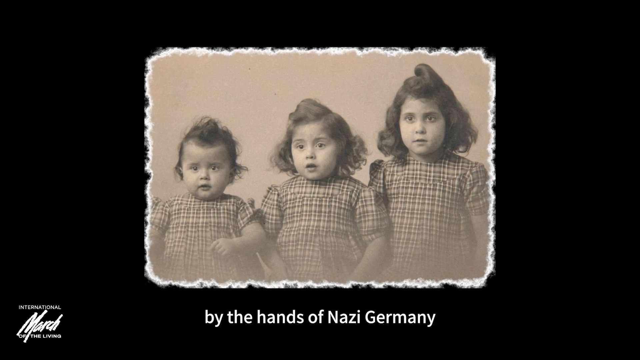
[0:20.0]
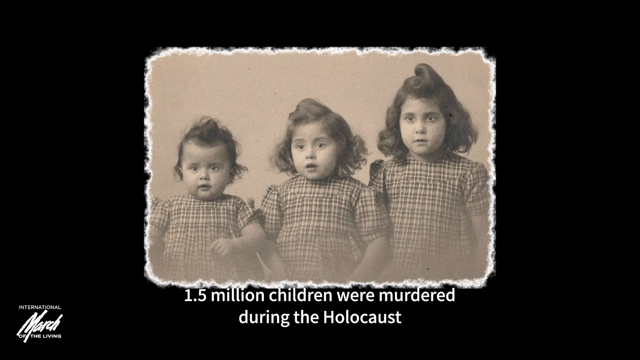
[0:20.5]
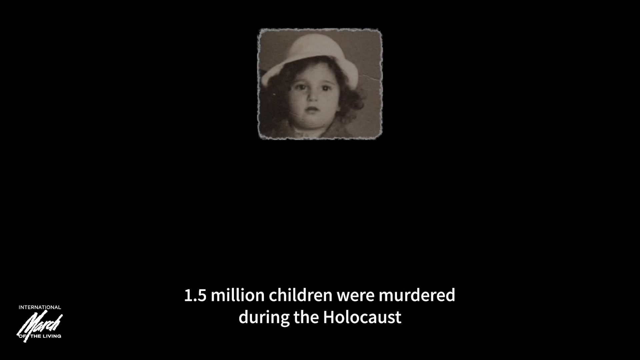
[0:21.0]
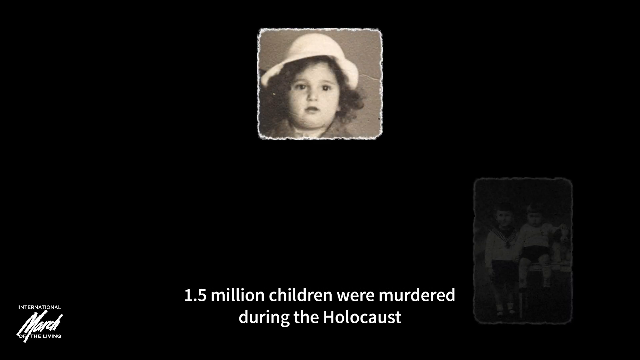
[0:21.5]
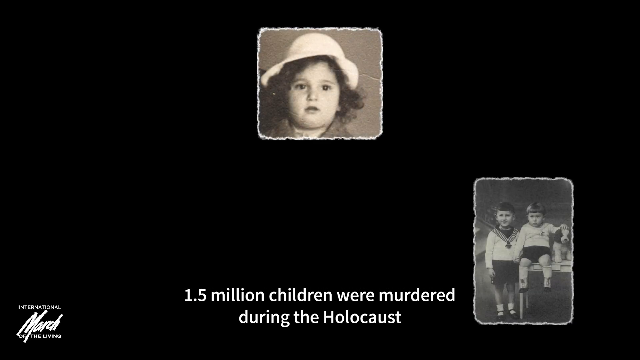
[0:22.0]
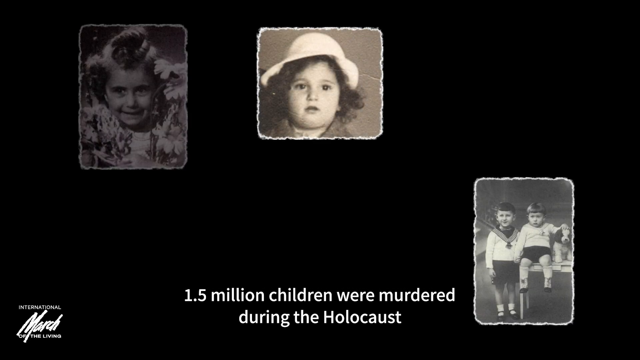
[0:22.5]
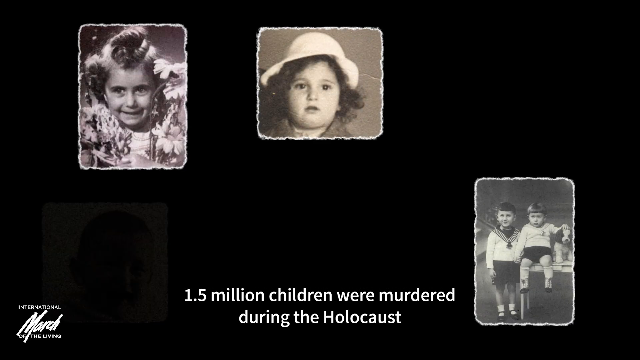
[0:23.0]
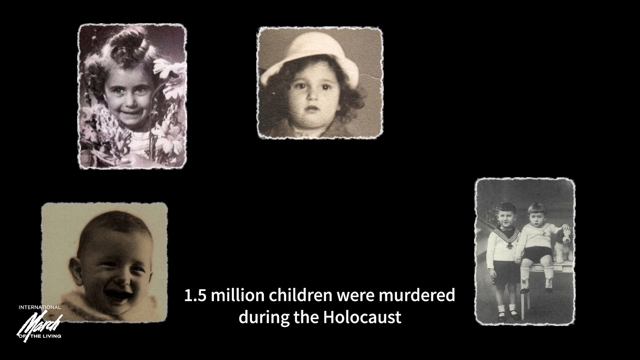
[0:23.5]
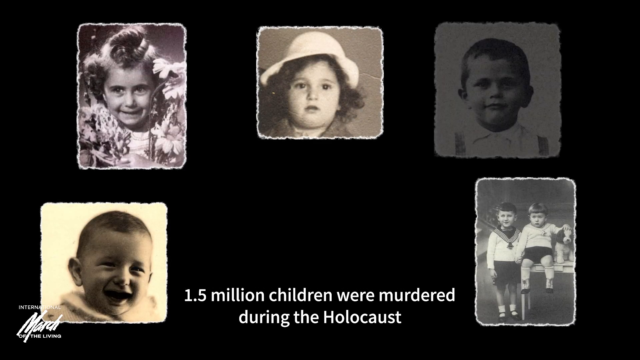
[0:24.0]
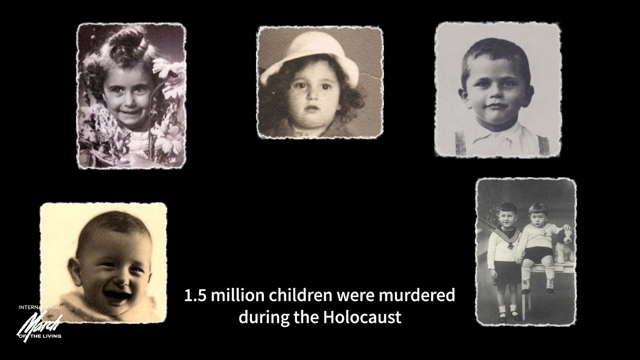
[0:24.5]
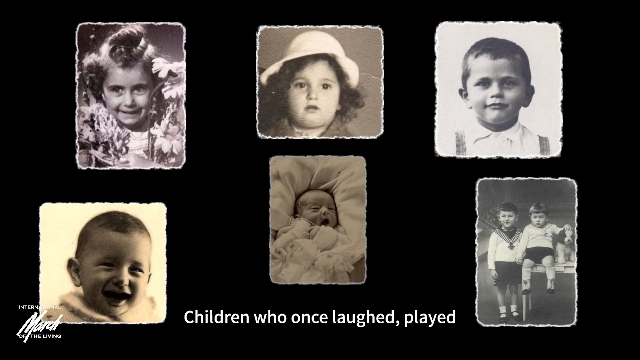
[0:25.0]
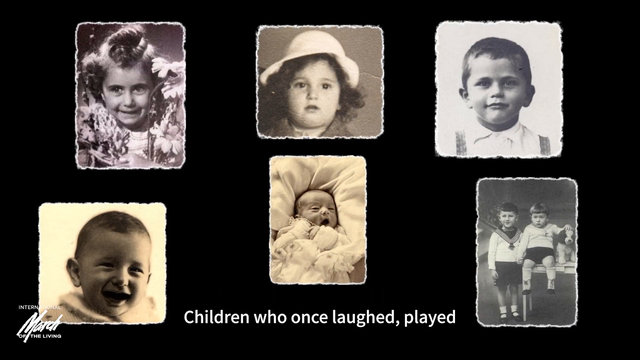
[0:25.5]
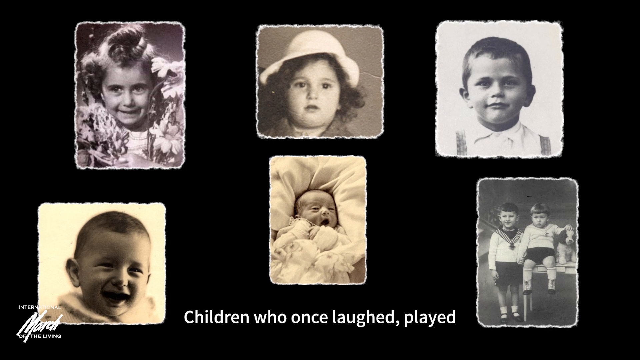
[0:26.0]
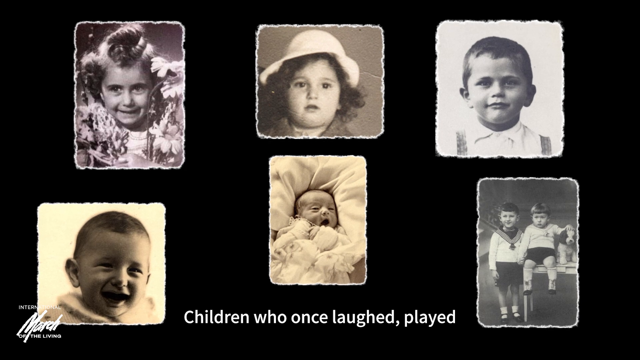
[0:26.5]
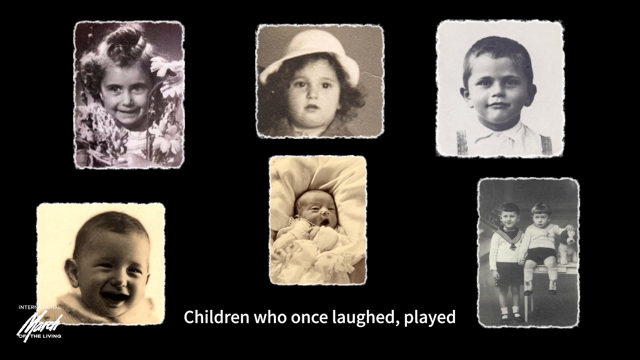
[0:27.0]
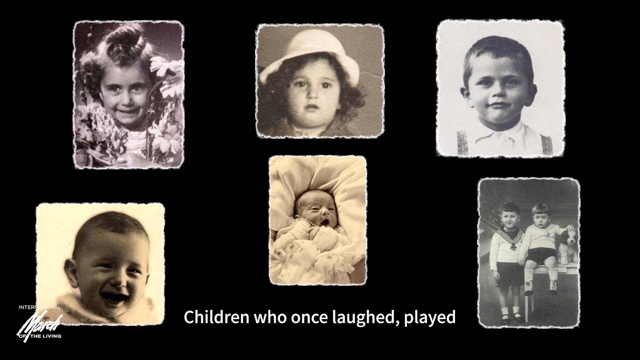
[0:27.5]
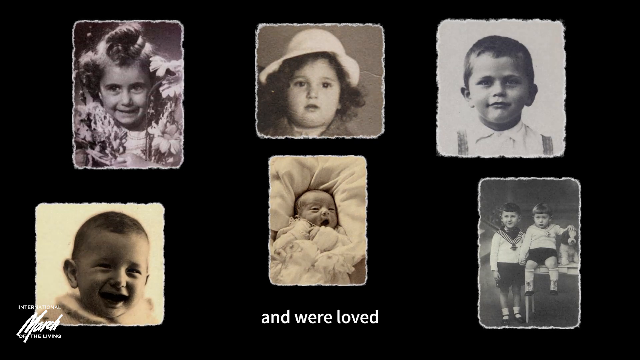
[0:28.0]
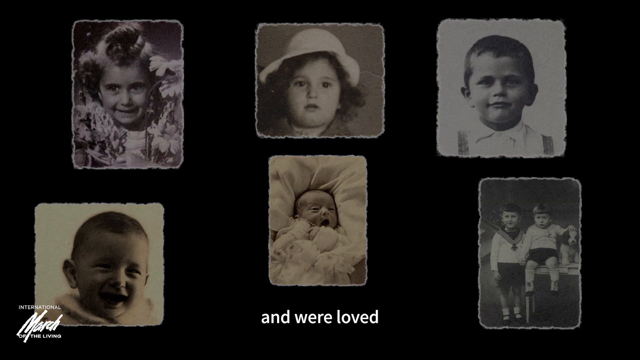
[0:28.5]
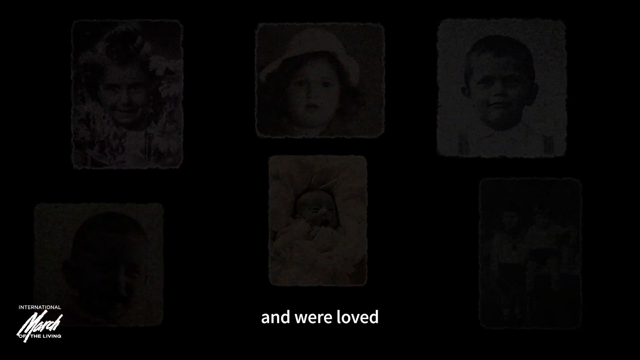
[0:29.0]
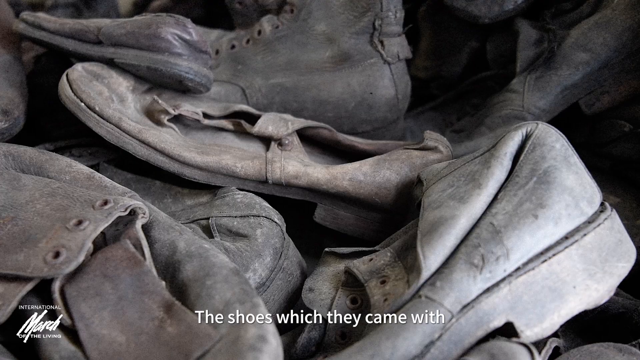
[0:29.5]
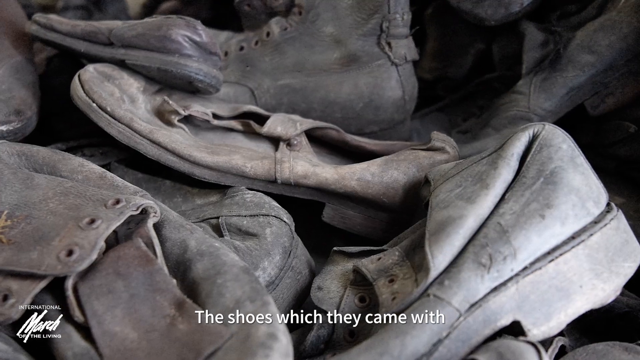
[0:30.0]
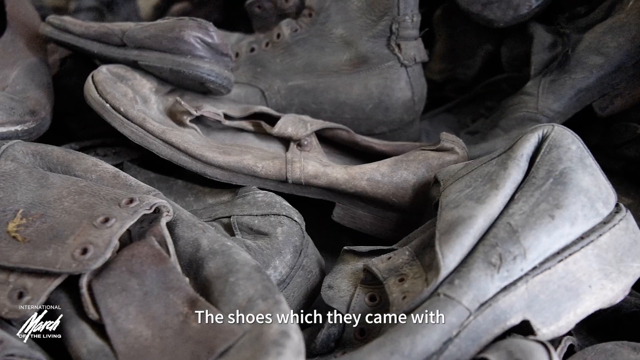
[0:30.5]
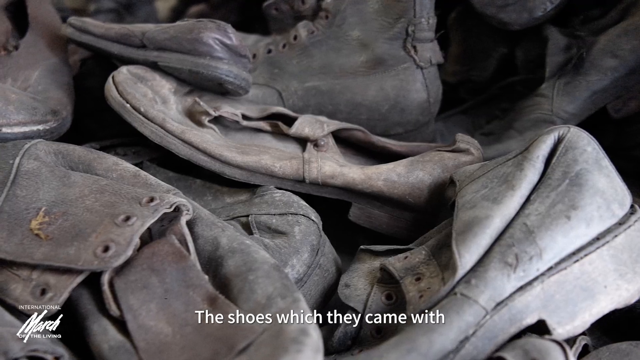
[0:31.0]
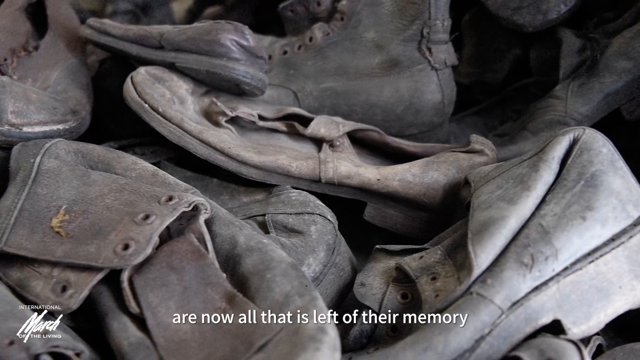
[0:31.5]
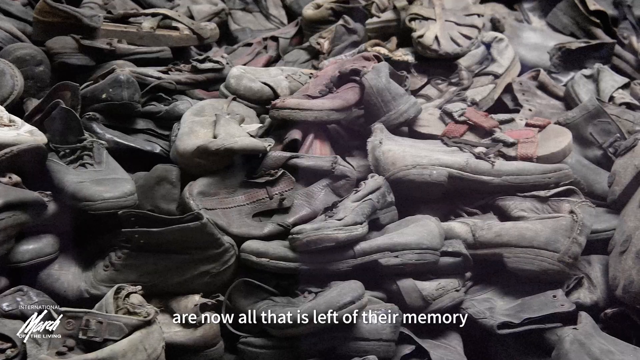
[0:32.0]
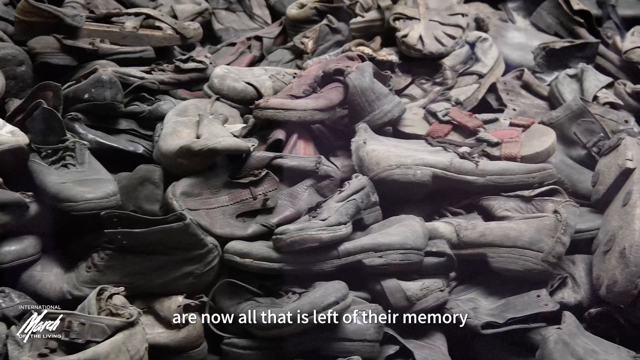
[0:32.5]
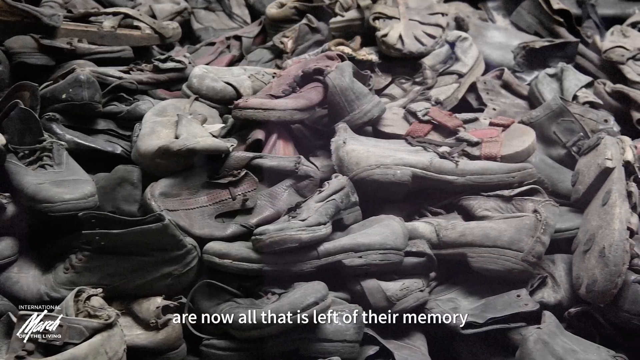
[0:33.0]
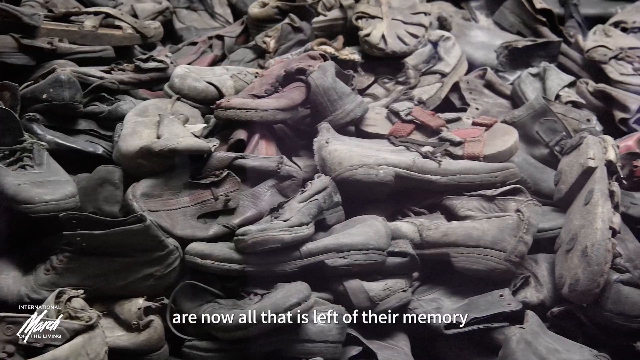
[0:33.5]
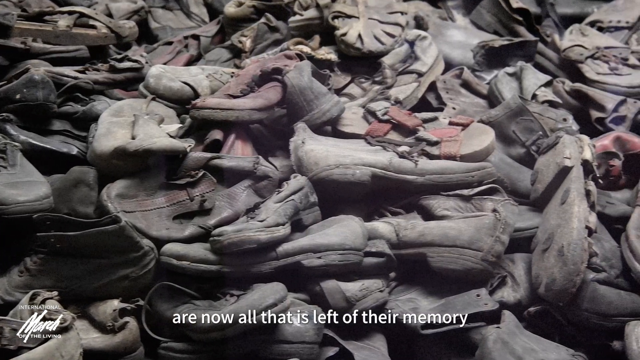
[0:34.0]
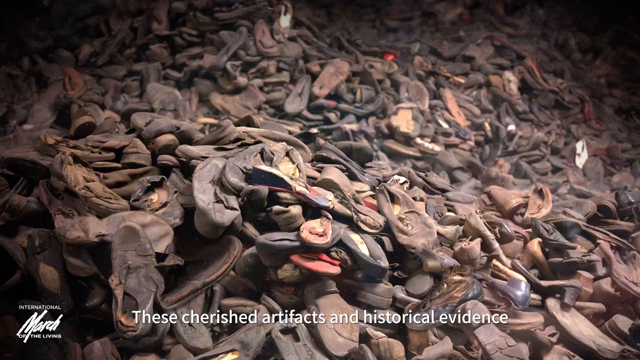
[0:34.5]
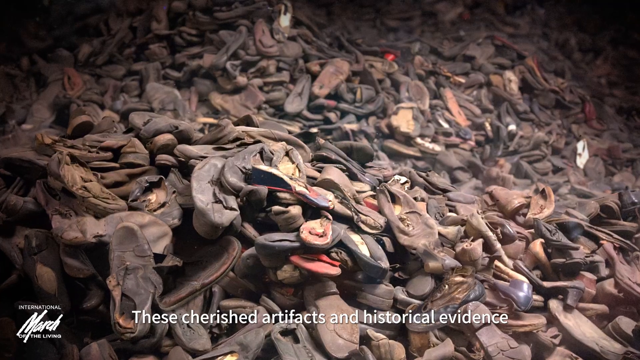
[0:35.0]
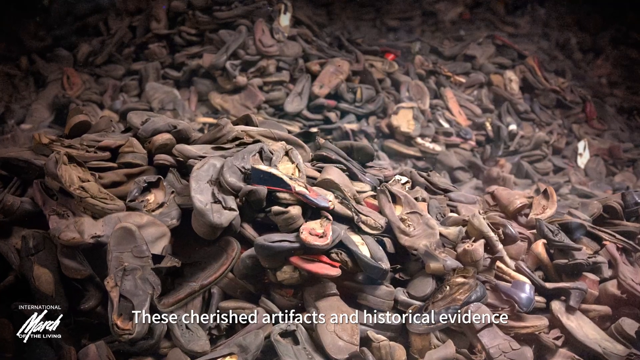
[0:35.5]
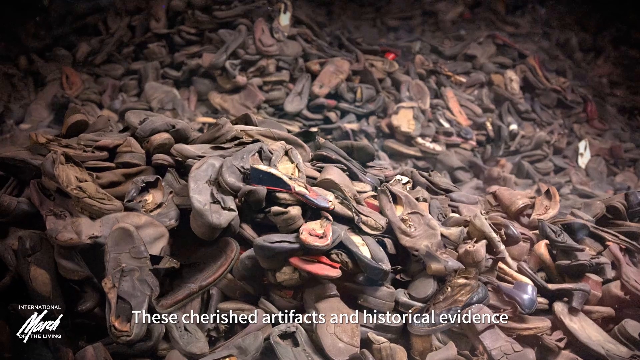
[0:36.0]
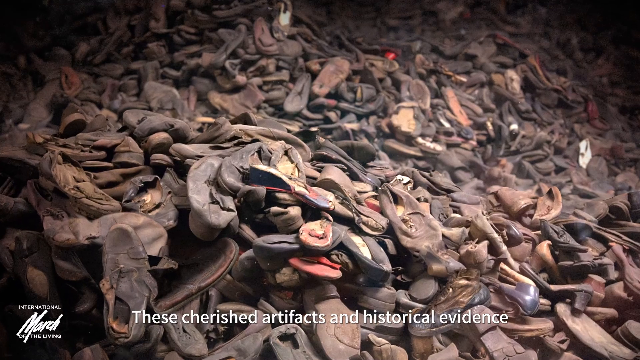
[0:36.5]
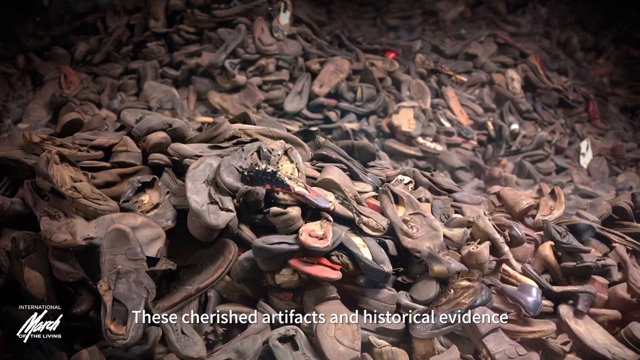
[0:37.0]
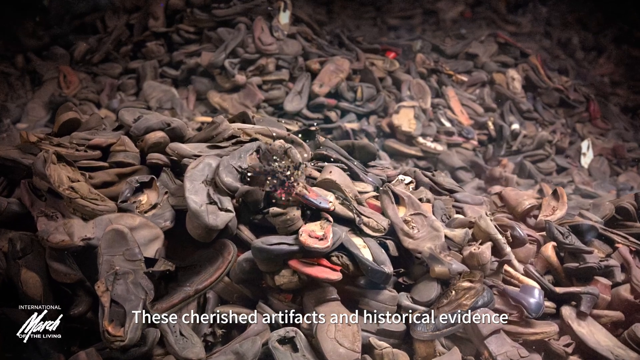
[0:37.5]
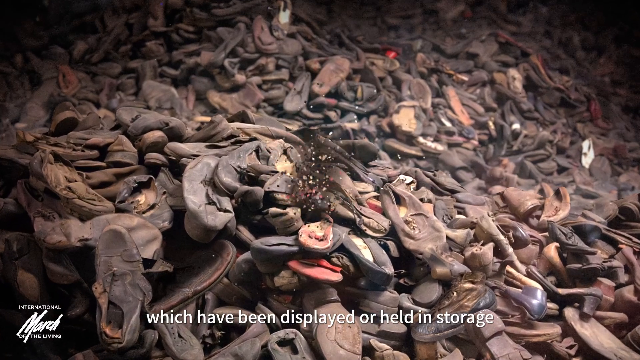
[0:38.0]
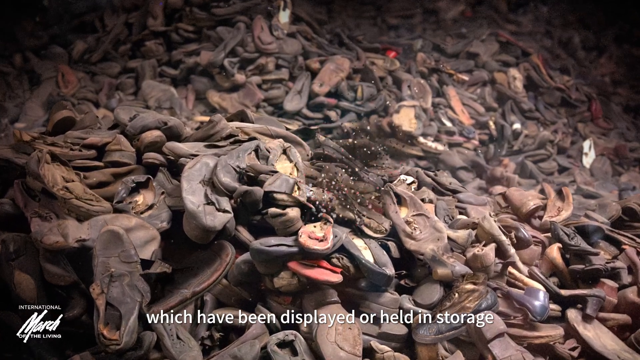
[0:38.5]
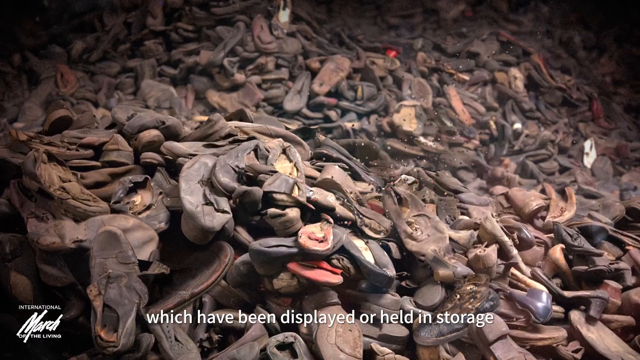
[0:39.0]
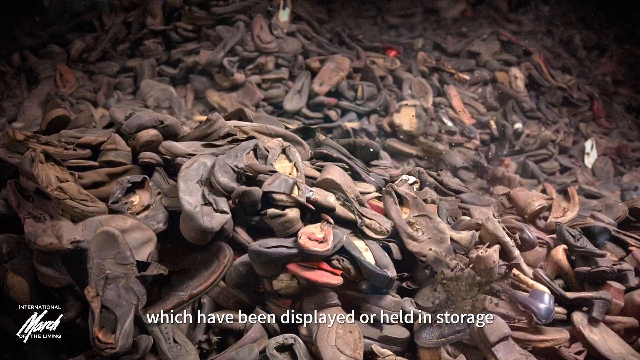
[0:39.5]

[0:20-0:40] Black-and-white photographs of young children appear one at a time, dotted around the screen. There is a little girl with curly hair and a hat, and a boy with short hair wearing a shirt and shoulder straps. One photo shows two little children, a brother and his baby brother: one is seated with a hand on a dog's head, and the other is standing in a little sailor costume. Another photo shows a little girl with curly hair, with what seem to be some flowers near her. Then there is a small, smiling baby with little hair. The photos look like they were taken around the 1940s; they are all black and white, some have sepia tones, and some look like they were taken in a studio. White text at the bottom of the black screen says "1.5 million children were murdered during the Holocaust." The video is possibly a historical documentary about the children's lives lost in the Holocaust.